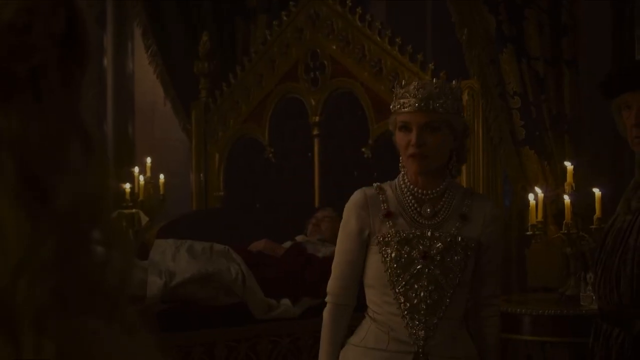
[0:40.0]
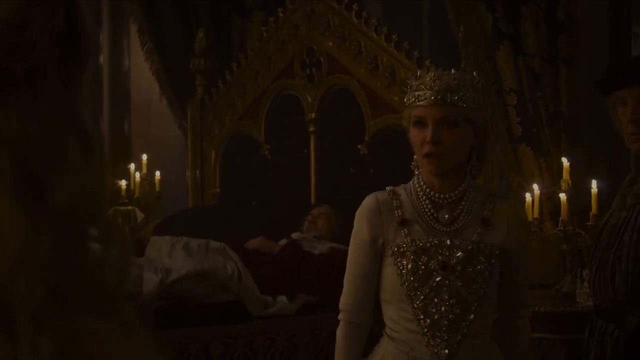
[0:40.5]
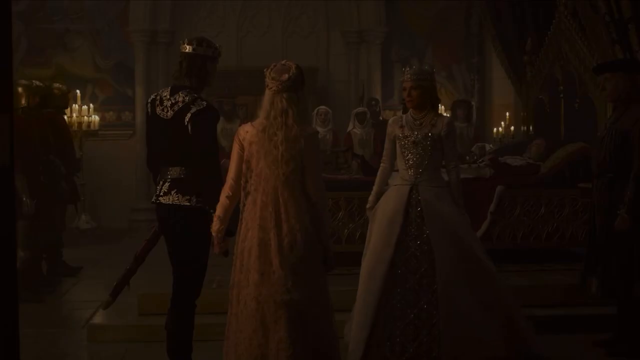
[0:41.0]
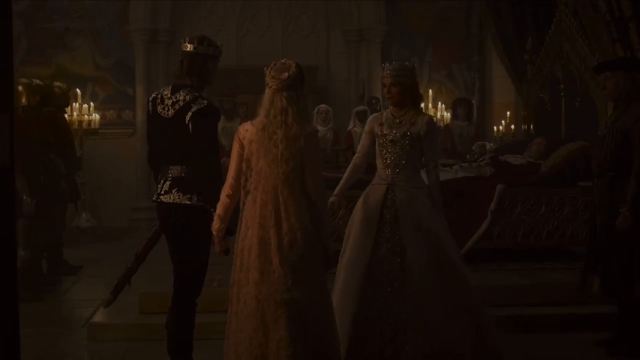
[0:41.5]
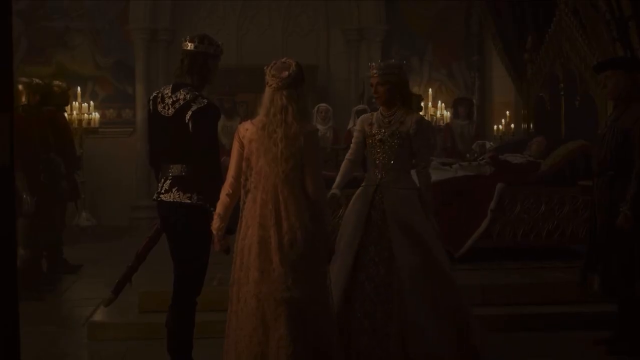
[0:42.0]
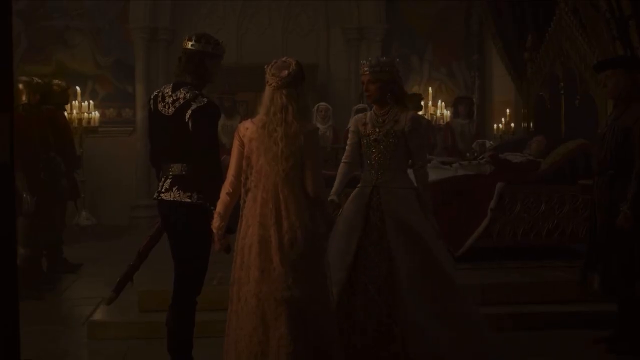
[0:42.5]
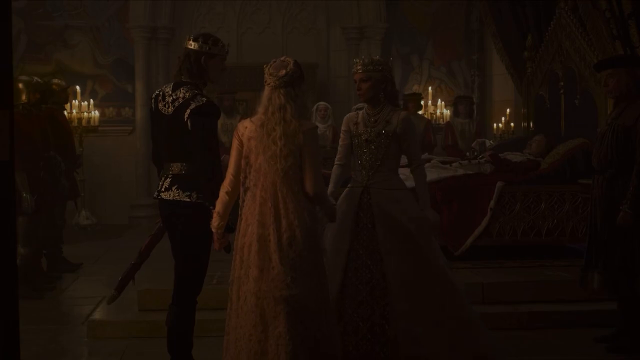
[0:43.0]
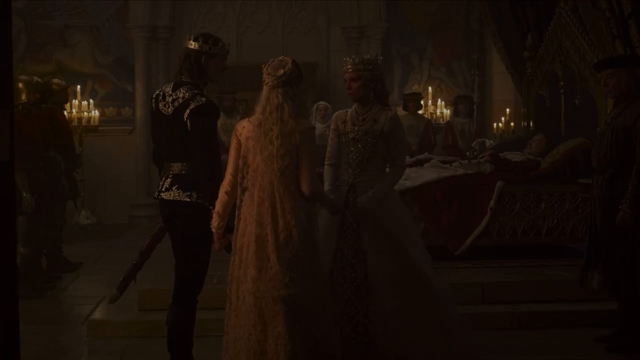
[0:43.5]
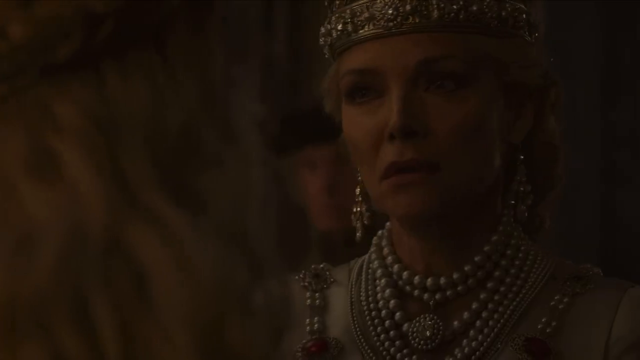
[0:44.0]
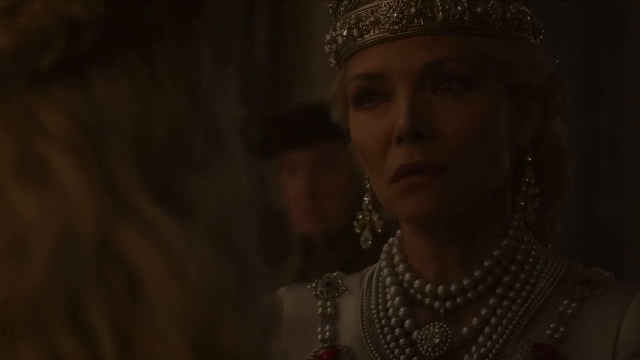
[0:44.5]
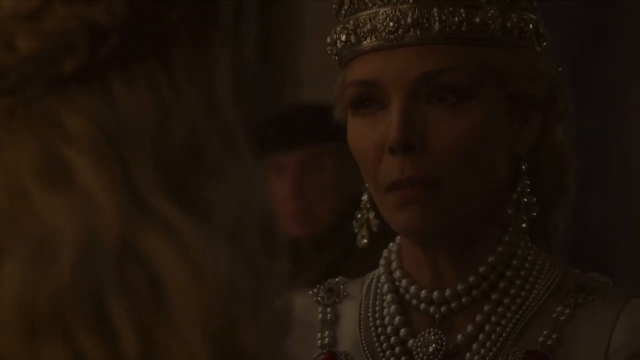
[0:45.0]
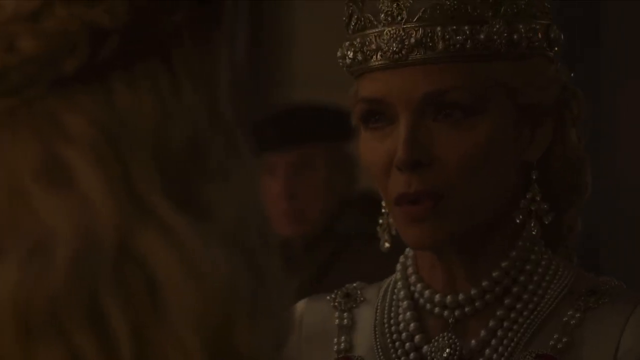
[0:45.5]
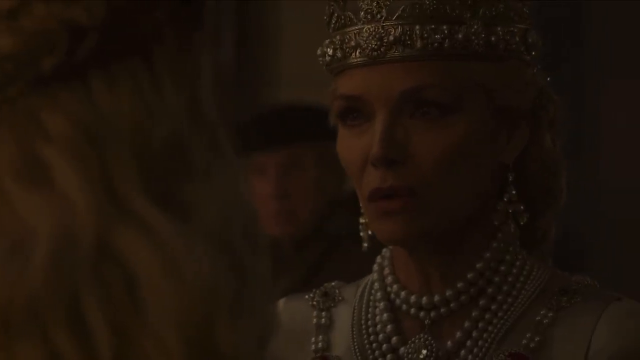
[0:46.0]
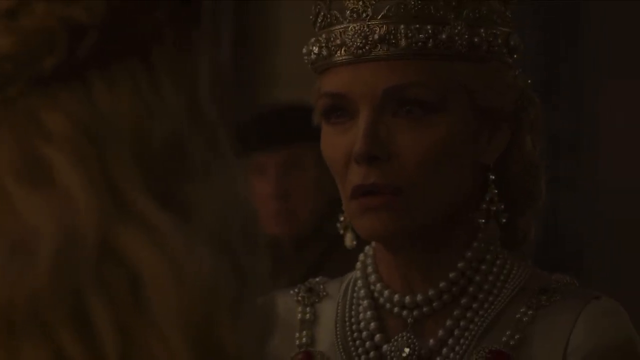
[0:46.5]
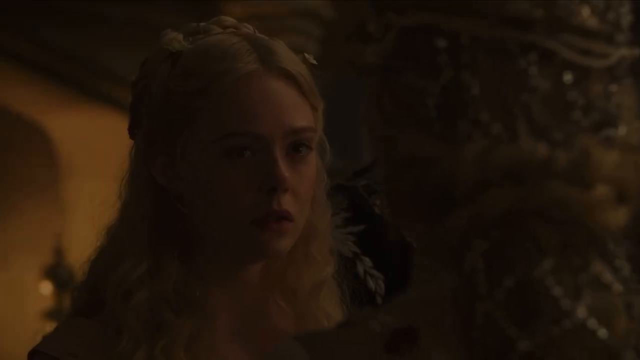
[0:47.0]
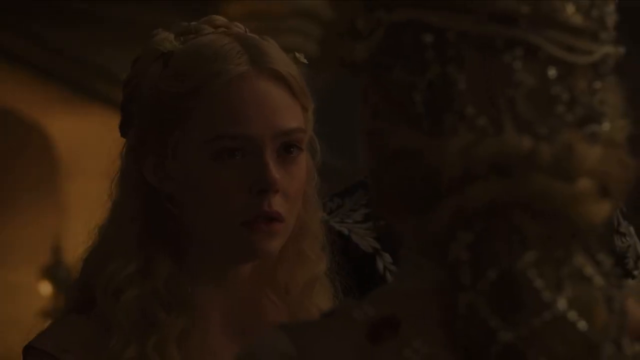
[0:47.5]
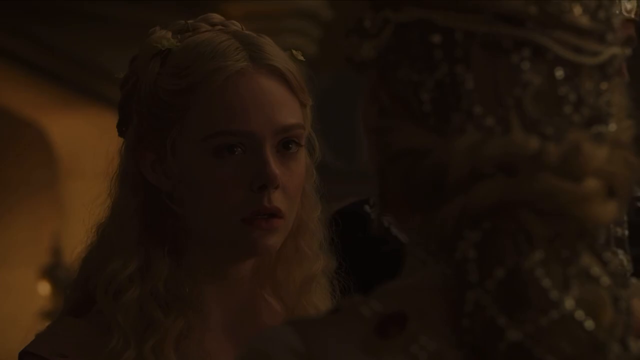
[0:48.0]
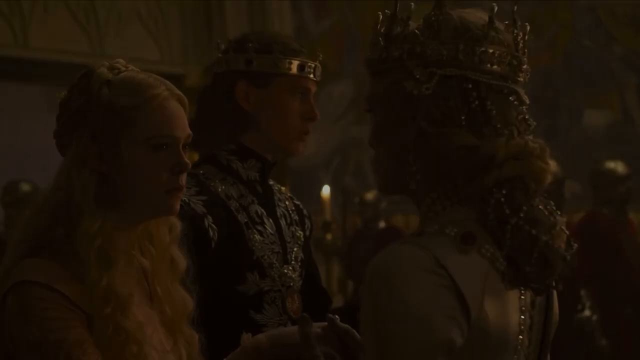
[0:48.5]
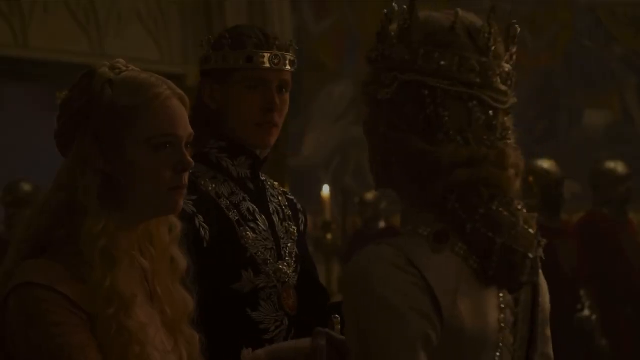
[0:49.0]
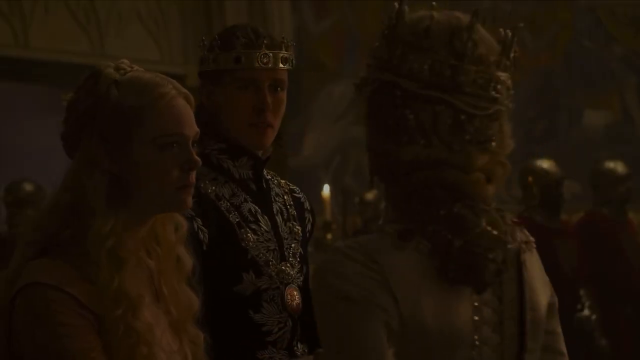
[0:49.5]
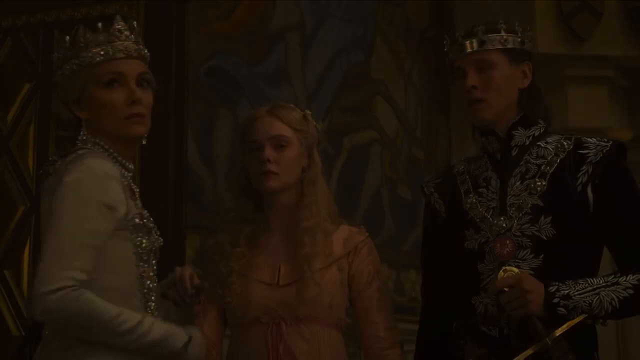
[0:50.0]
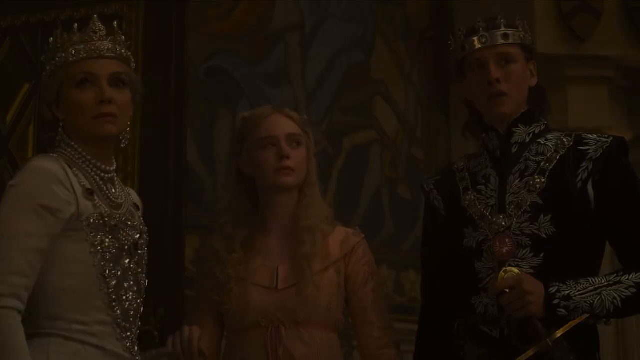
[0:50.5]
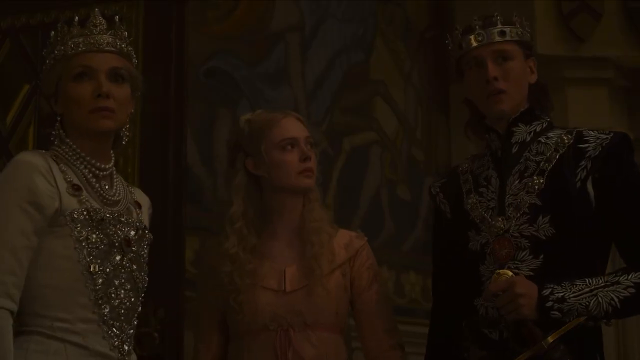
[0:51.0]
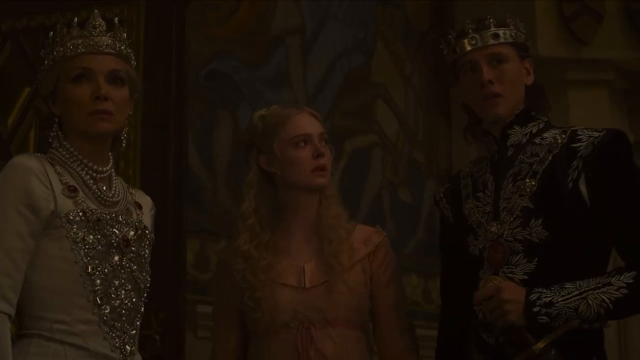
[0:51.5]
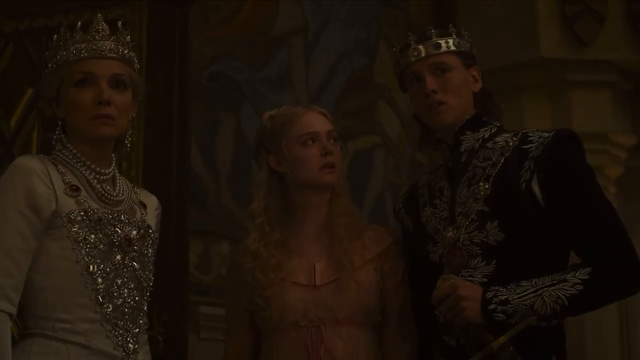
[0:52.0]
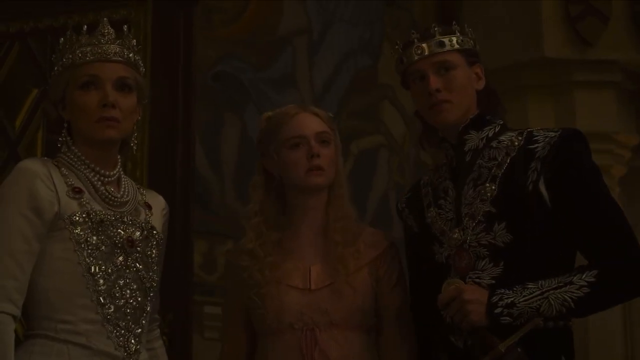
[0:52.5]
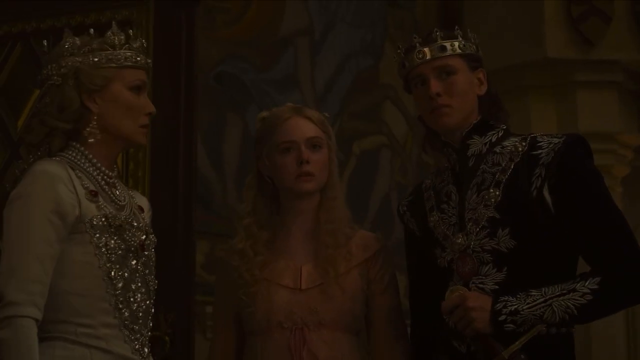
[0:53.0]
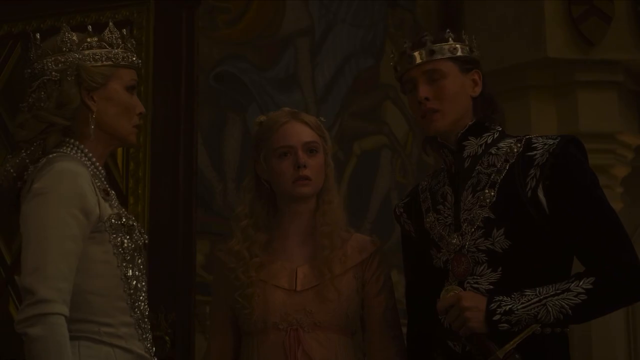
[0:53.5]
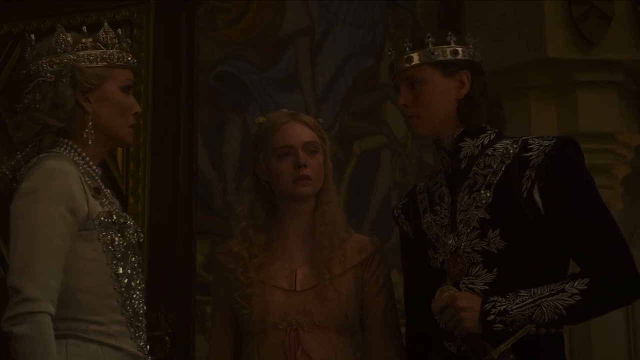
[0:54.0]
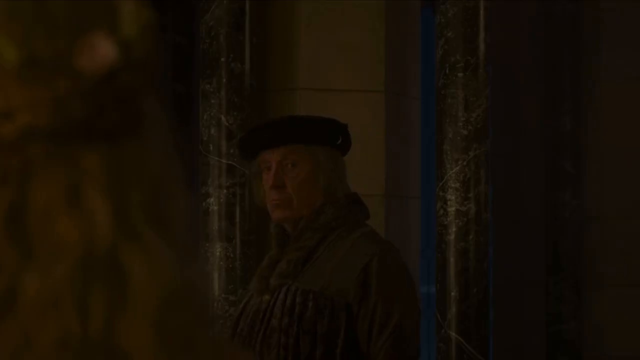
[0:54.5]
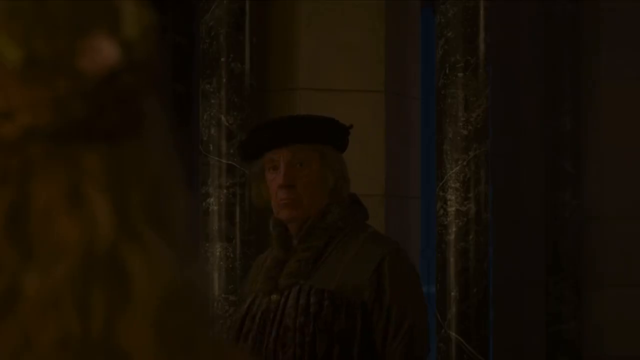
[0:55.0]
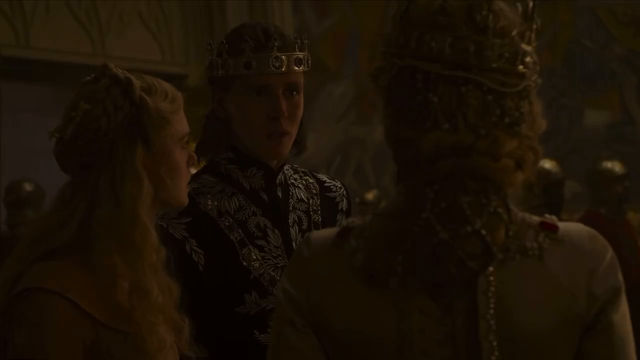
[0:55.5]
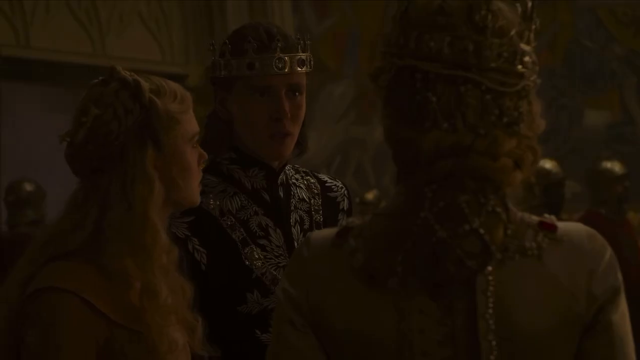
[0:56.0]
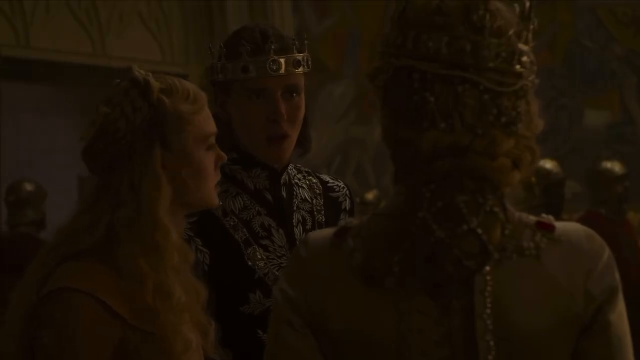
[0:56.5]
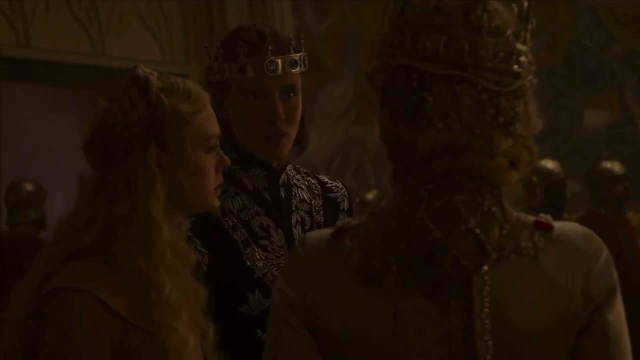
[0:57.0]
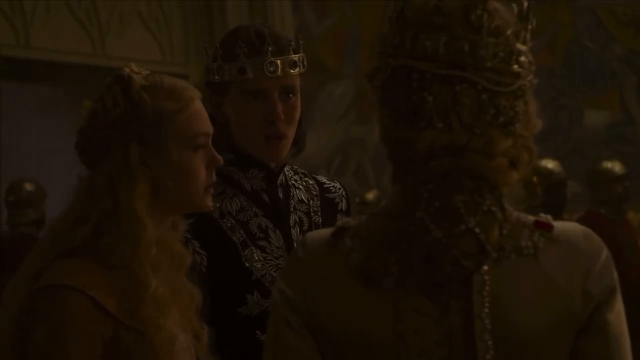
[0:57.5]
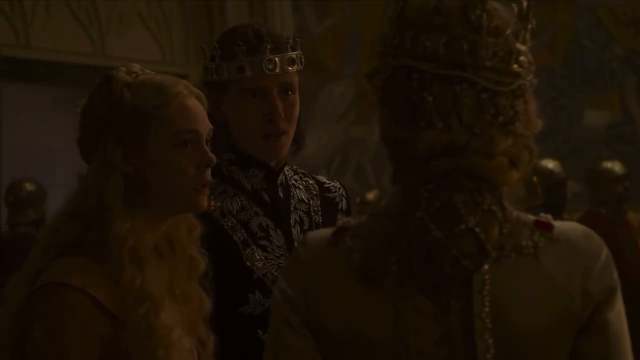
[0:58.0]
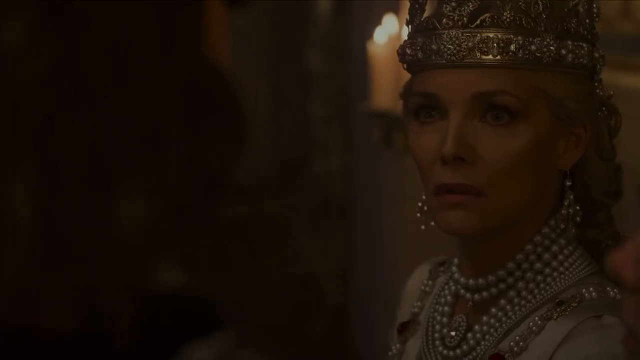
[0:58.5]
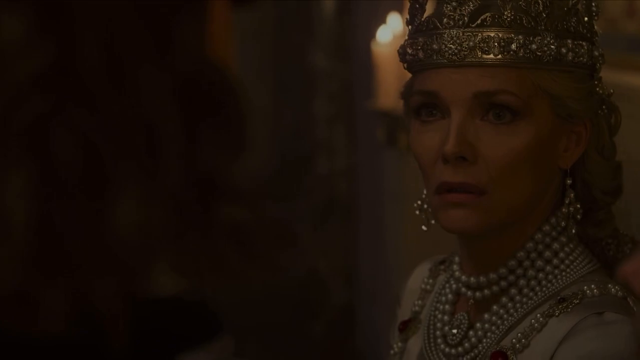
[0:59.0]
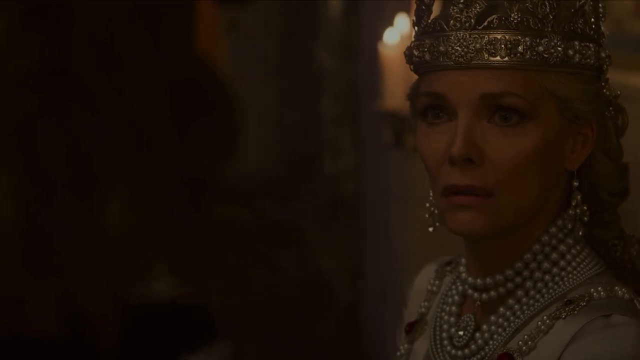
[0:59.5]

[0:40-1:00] The king is still lying down, showing no signs of regaining his health. The kings, queens, princesses and princes all show signs of worry, as do the soldiers and the palace workers. The queen mother, the prince and the princesses have a short talk. There are candles on each side of the king.